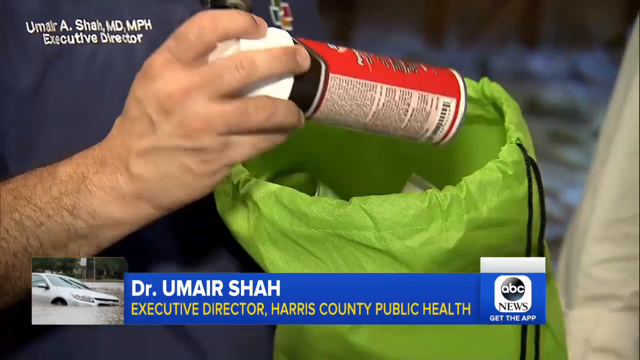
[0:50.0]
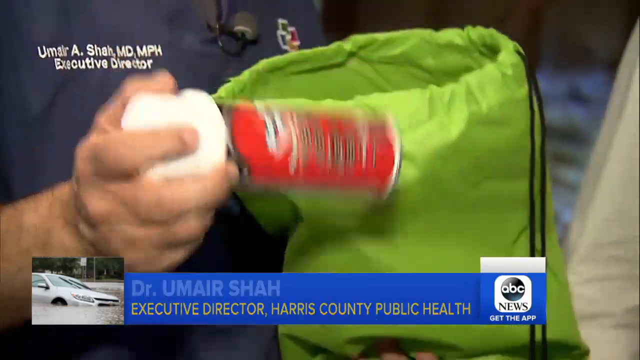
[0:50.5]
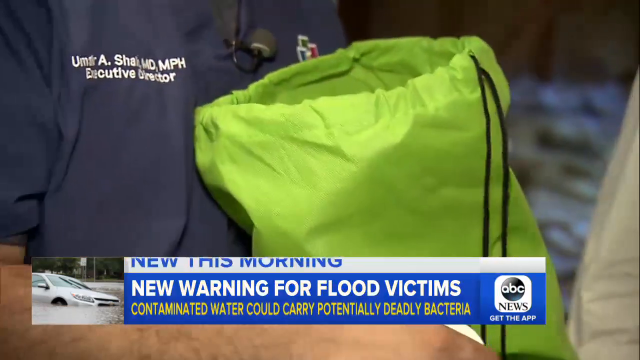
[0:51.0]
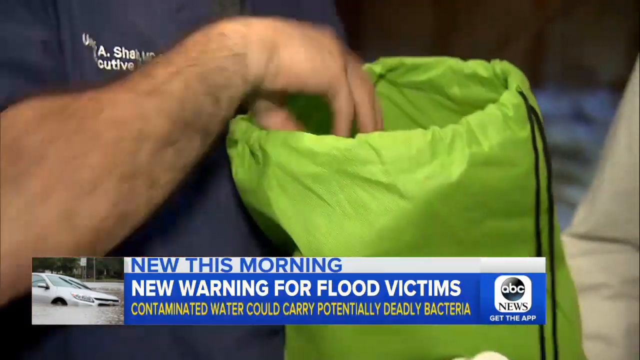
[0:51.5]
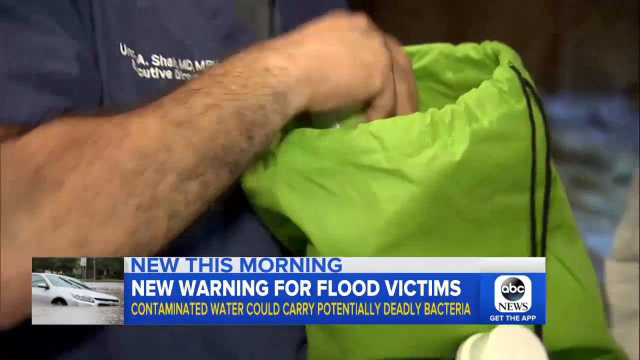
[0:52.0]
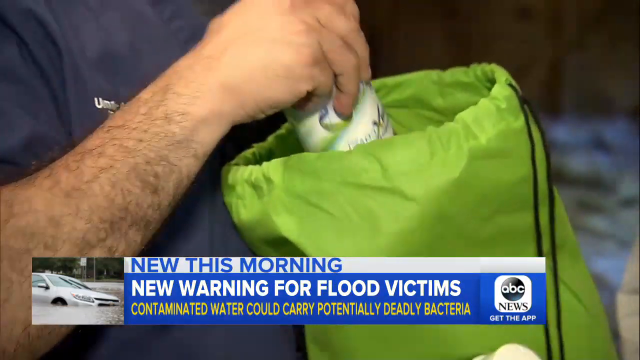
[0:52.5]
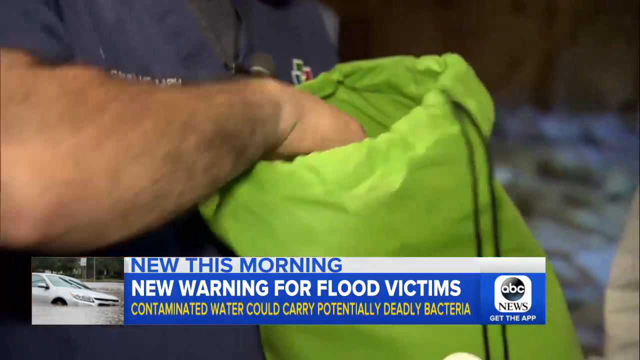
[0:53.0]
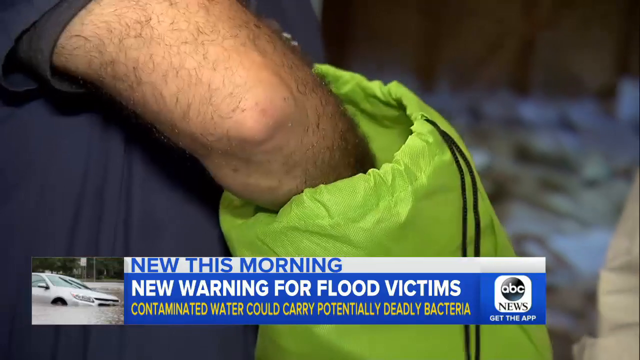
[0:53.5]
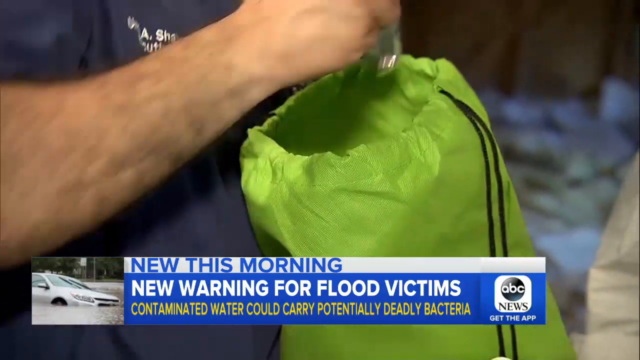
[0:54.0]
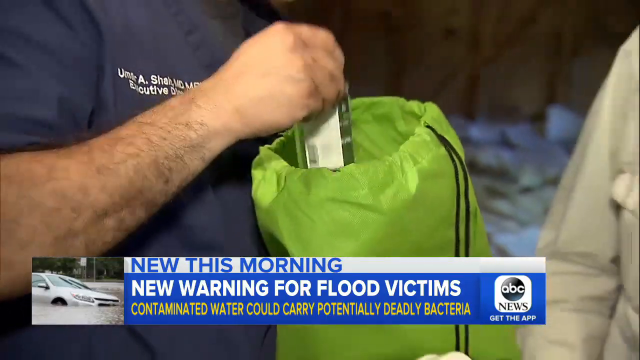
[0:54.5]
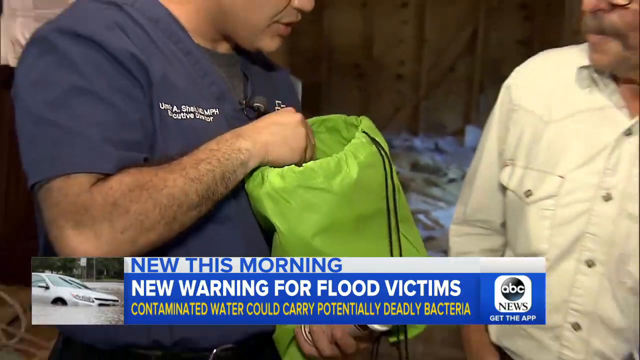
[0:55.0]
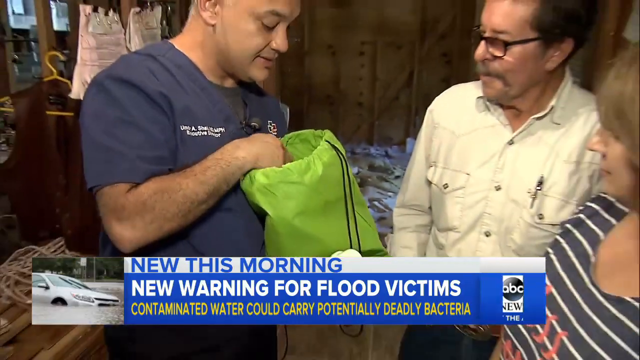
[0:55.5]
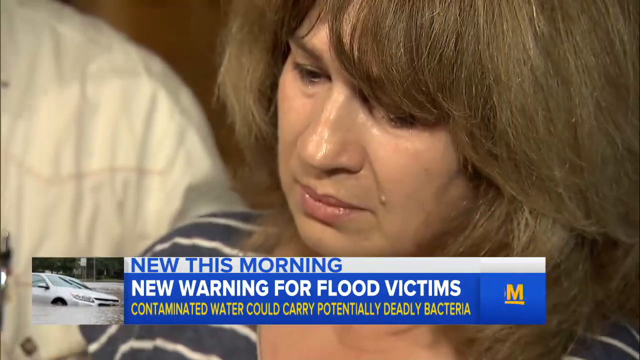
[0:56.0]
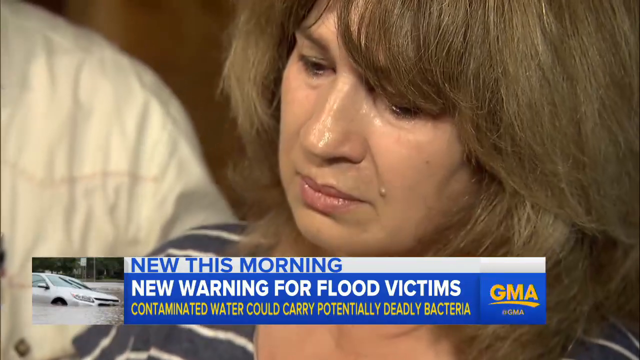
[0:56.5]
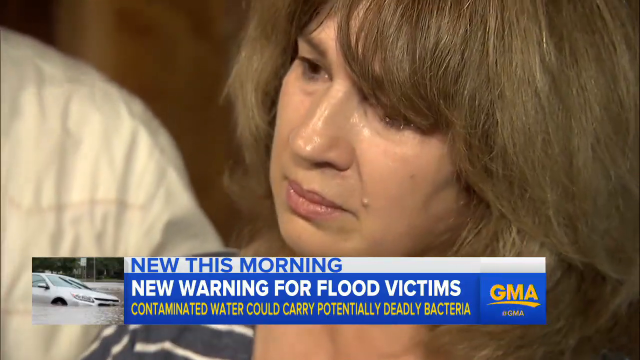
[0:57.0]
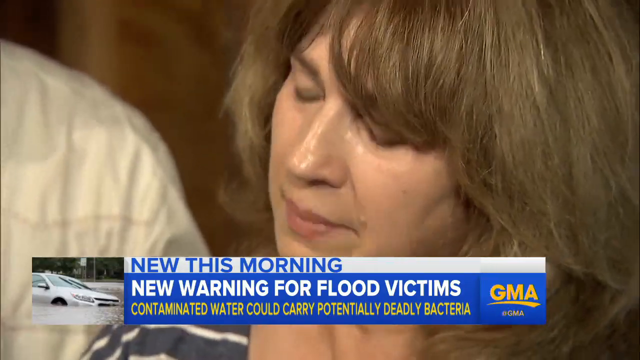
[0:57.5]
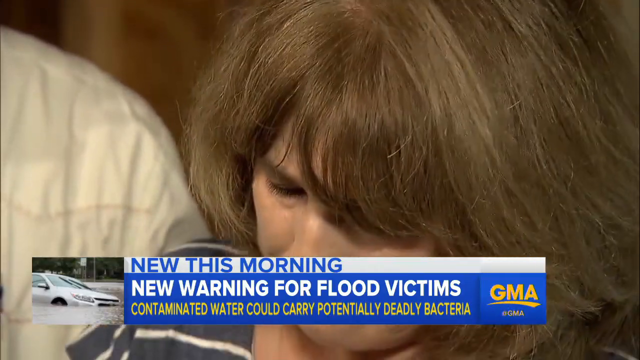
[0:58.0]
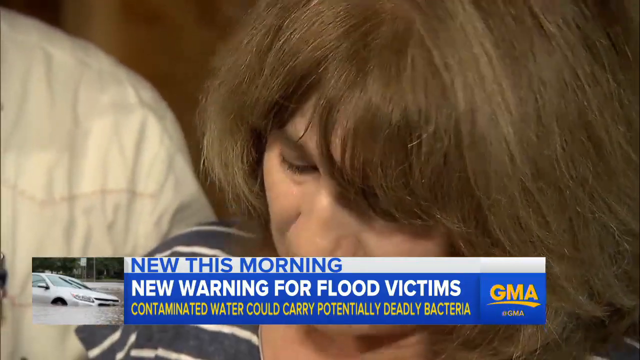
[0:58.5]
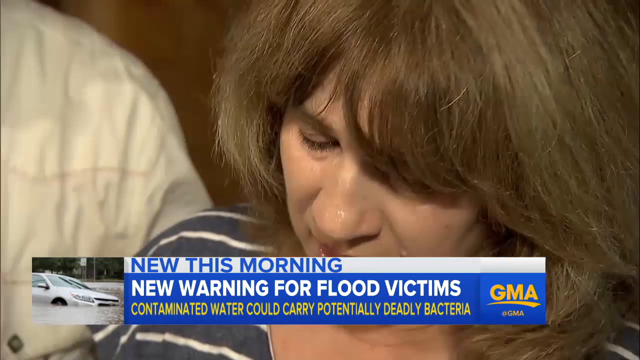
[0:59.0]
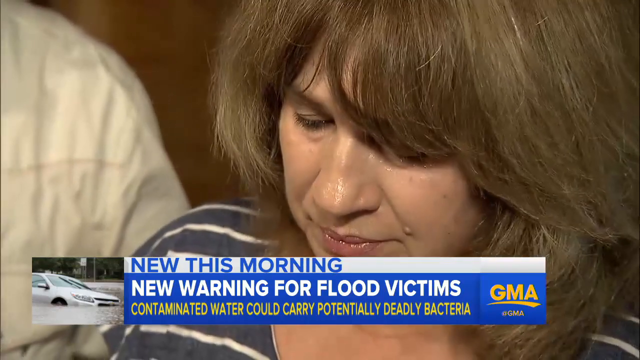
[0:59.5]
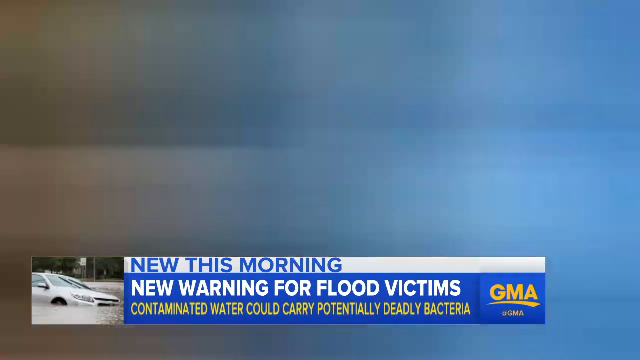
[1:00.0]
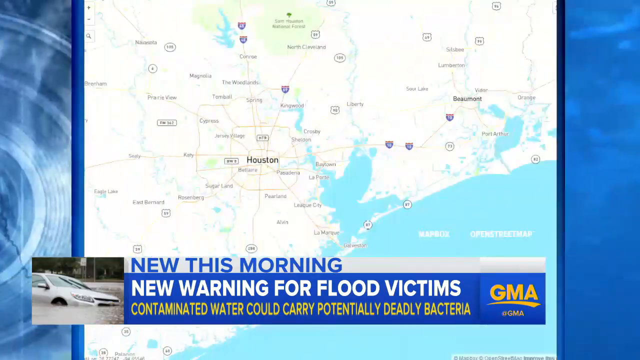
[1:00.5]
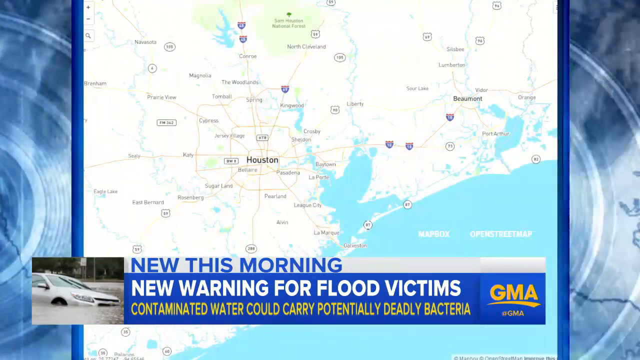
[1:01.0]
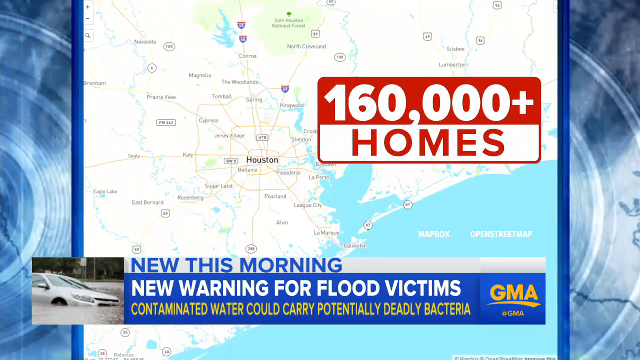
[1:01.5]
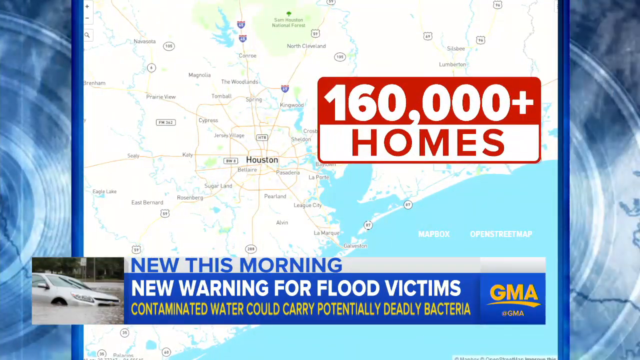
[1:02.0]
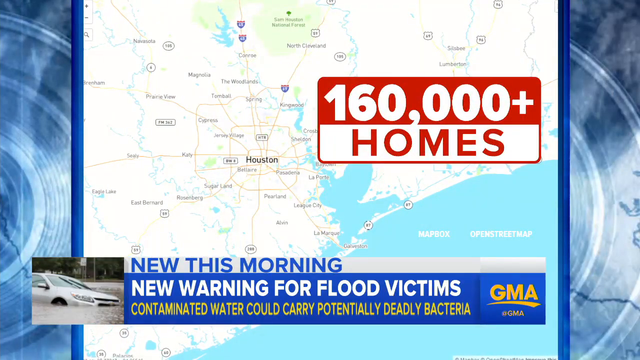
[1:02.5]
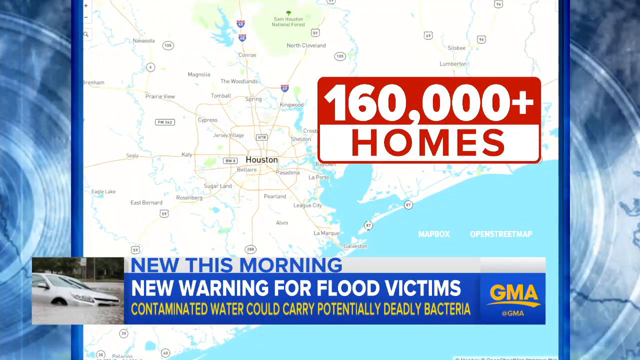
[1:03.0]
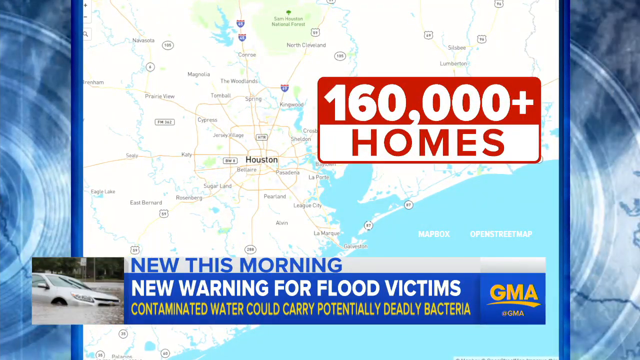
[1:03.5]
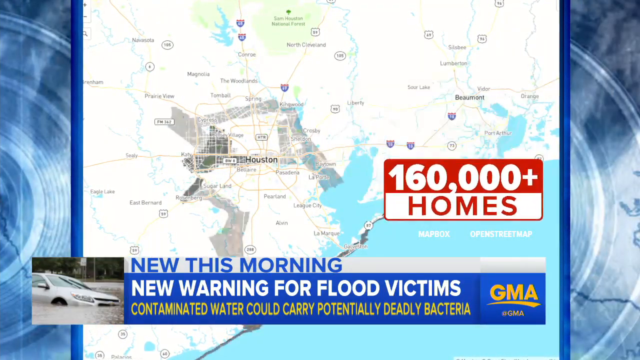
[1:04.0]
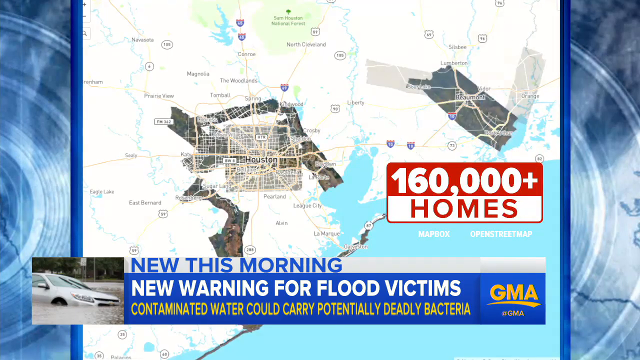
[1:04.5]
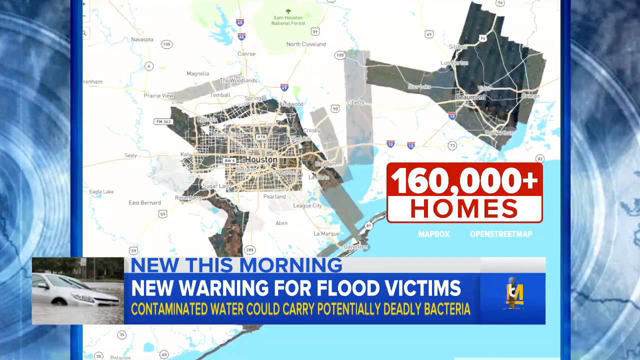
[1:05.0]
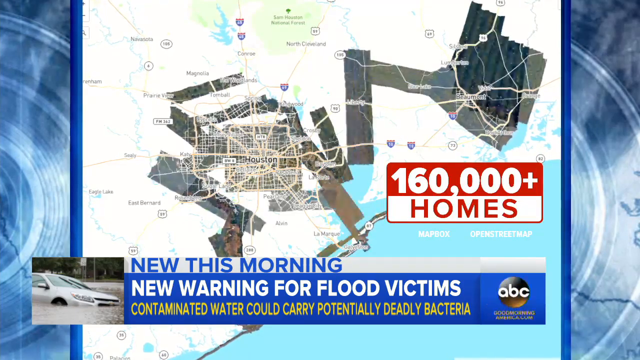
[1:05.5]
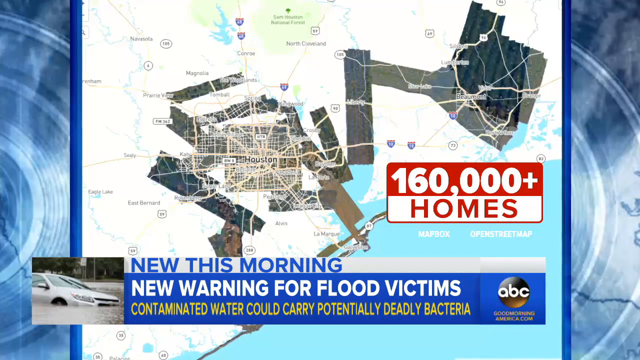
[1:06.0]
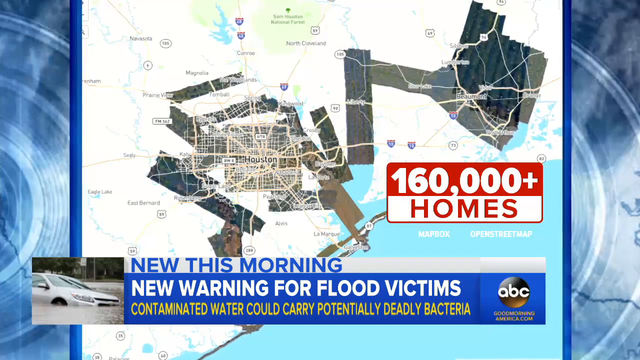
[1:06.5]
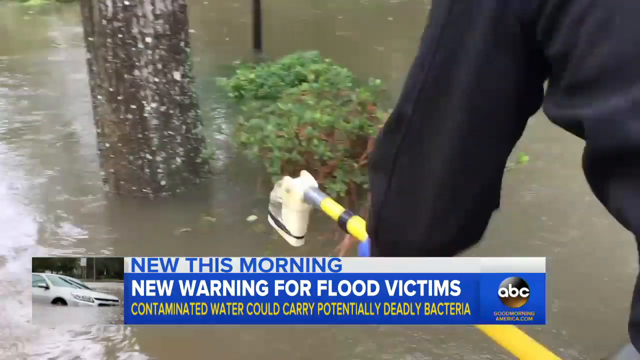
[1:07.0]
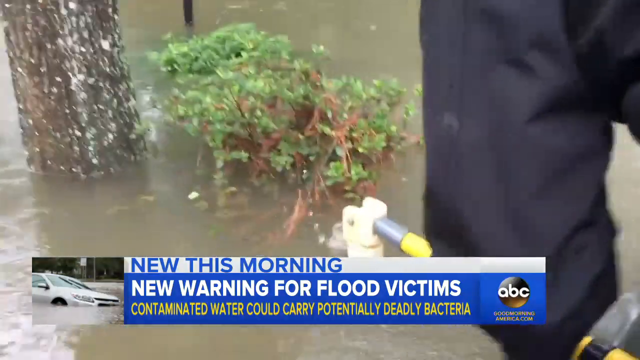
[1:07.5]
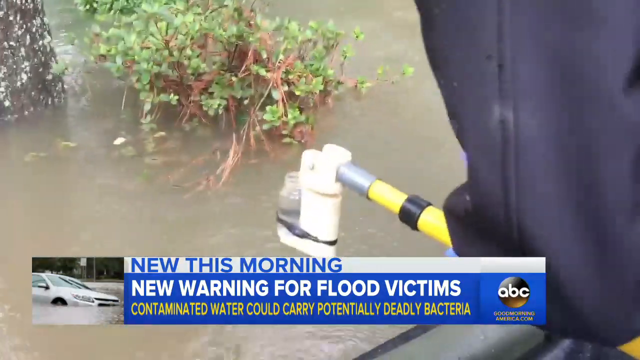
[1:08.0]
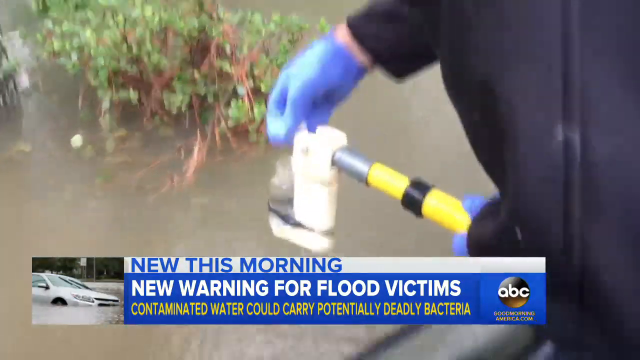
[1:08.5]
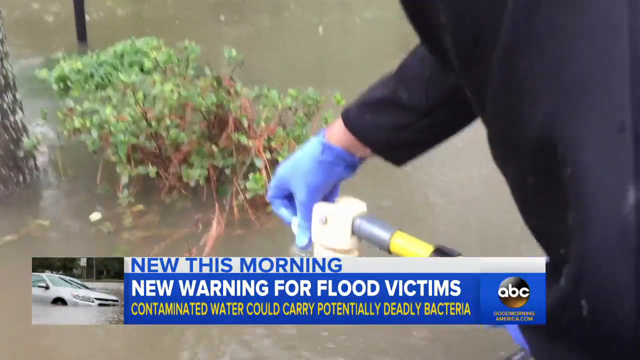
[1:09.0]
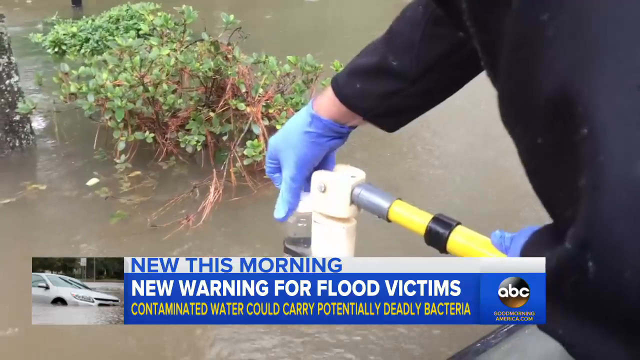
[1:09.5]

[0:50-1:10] This Good Morning America news report concerns the possibility of contaminated water in a flooded area. It opens on a man identified at the bottom of the screen as "Dr. Umair Shah, Executive Director, Harris County Public Health," speaking to a couple inside a gutted home. He holds a green sack in his hand and pulls out bottles of Lysol and other presumably cleaning products. A text bar at the bottom of the screen reads, "New this morning, New warning for flood victims. Contaminated water could carry potentially deadly bacteria." The ABC News logo is next to it and at one point switches to the GMA logo. The scene then switches to a map of Texas with Houston in the center, and a text bar next to it reads "160,000+ Homes." The map is gradually illustrated with what look like aerial views of the areas on the map.